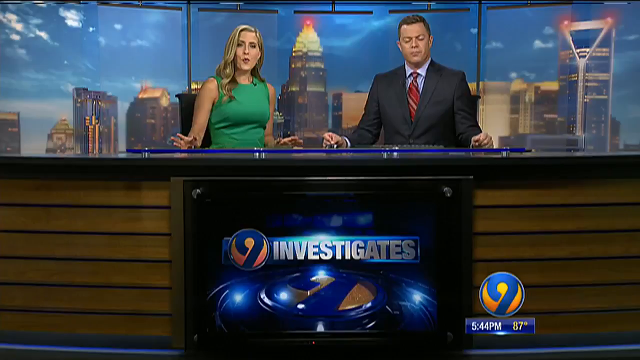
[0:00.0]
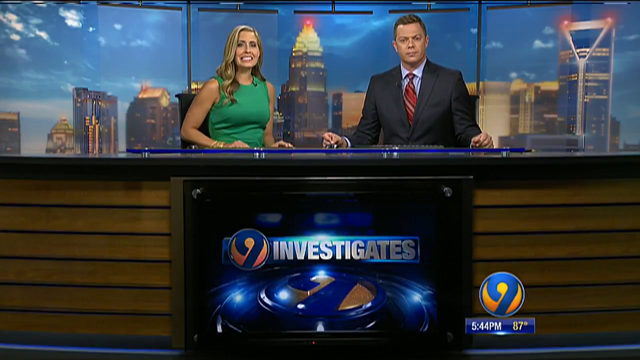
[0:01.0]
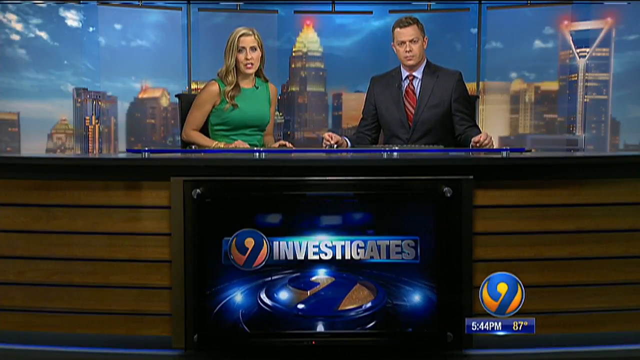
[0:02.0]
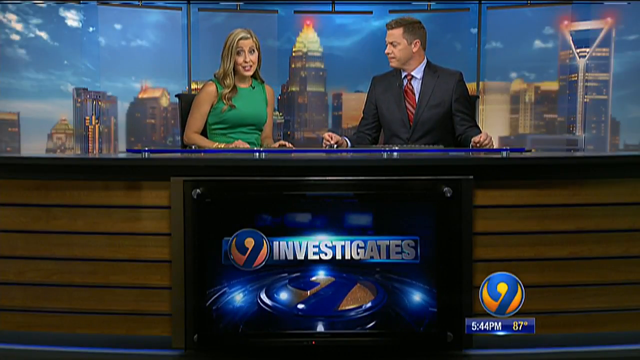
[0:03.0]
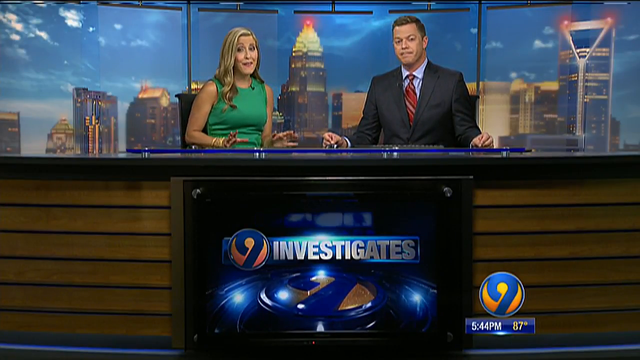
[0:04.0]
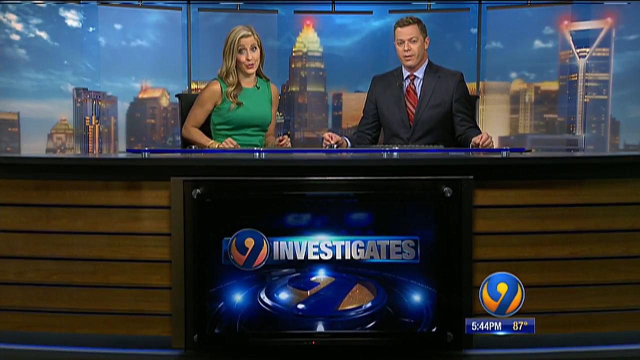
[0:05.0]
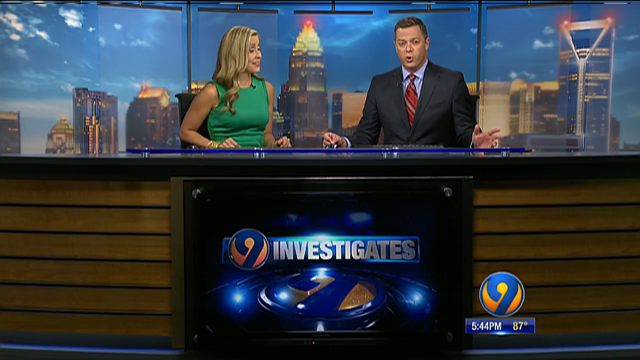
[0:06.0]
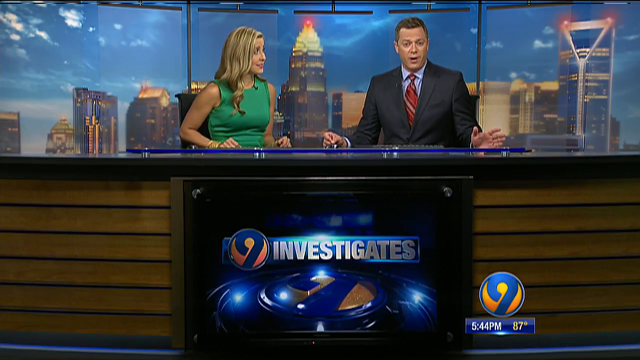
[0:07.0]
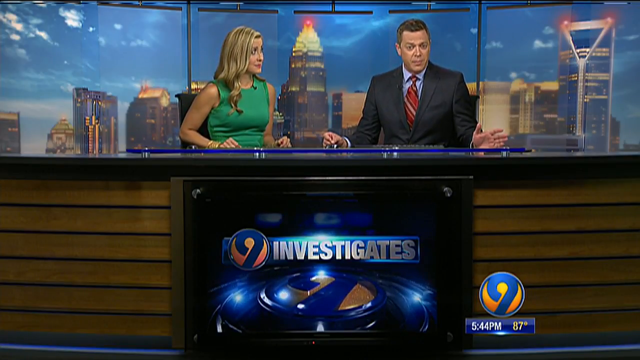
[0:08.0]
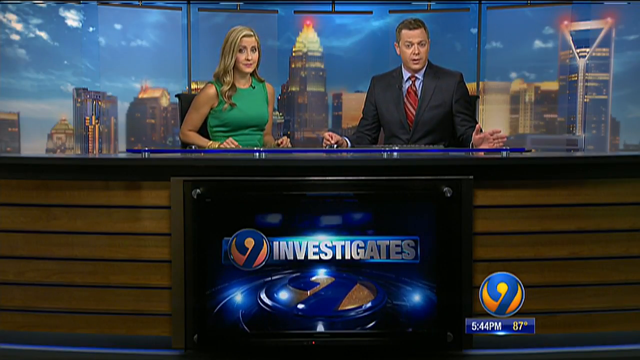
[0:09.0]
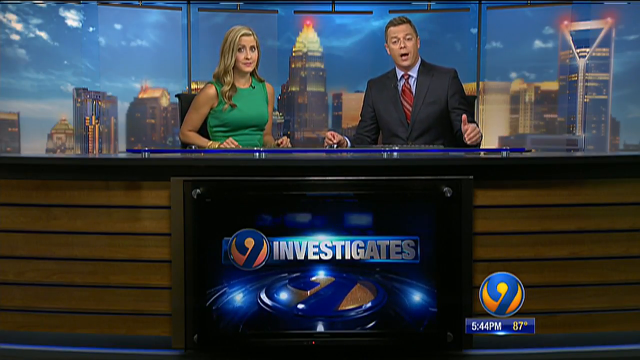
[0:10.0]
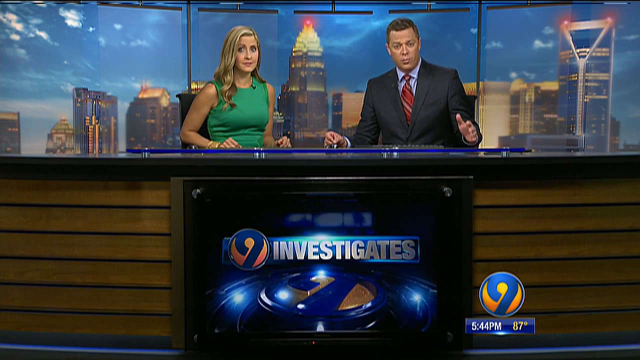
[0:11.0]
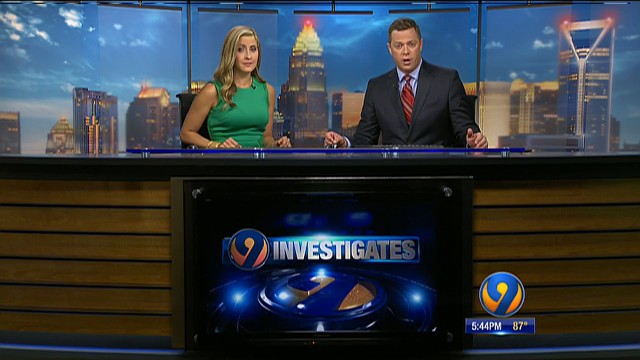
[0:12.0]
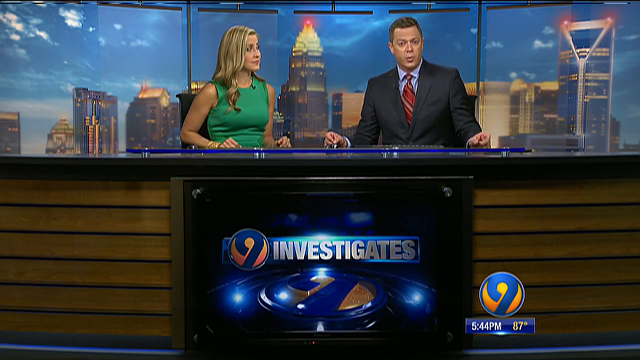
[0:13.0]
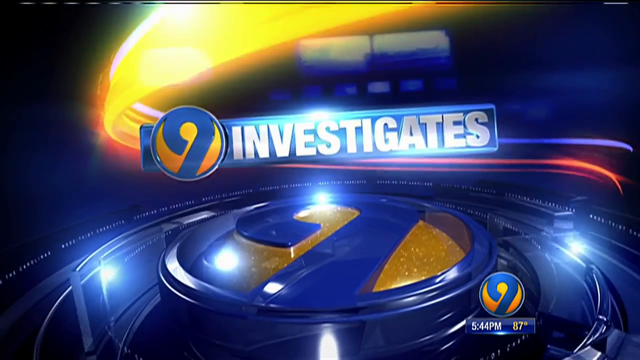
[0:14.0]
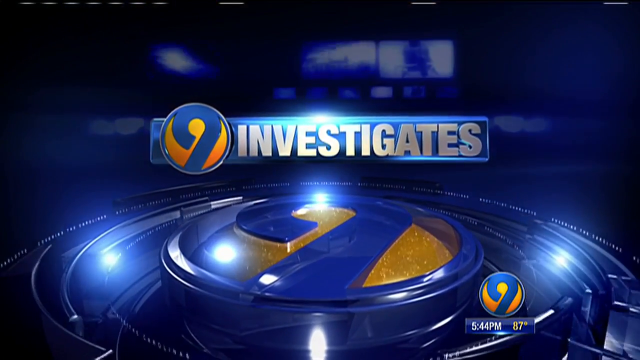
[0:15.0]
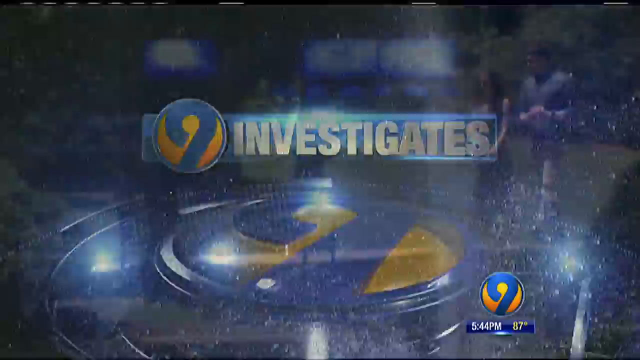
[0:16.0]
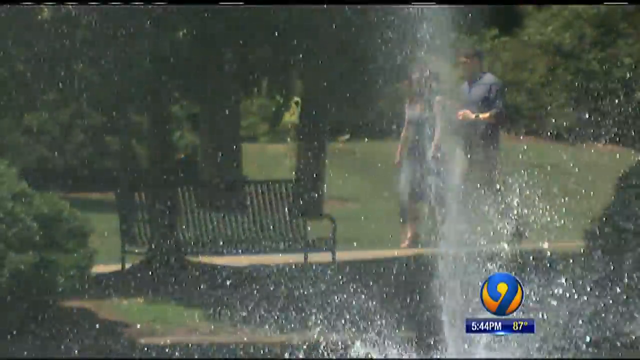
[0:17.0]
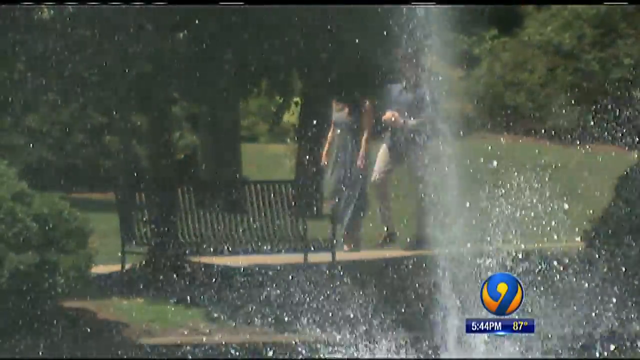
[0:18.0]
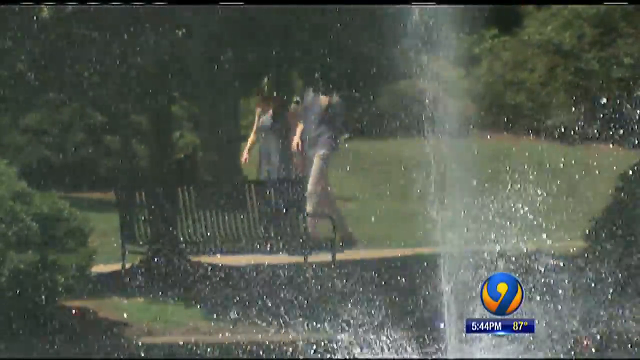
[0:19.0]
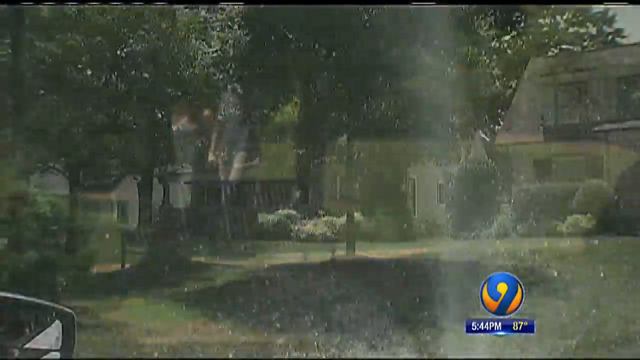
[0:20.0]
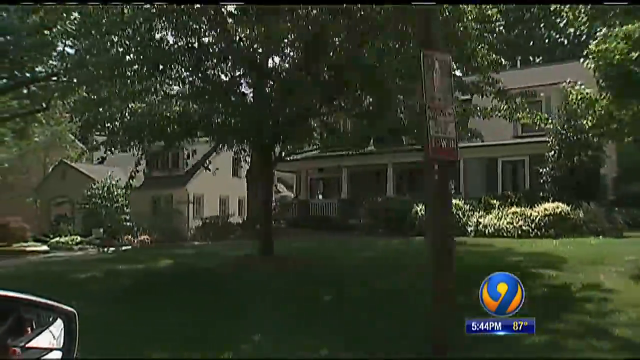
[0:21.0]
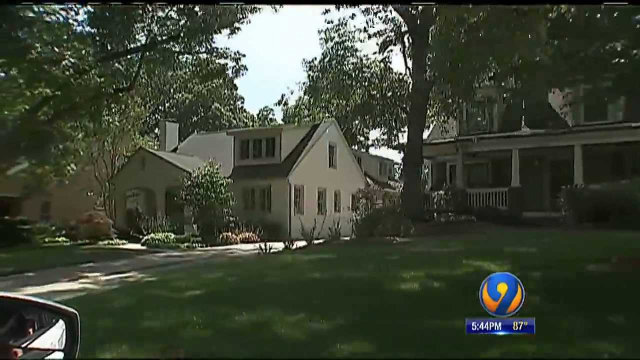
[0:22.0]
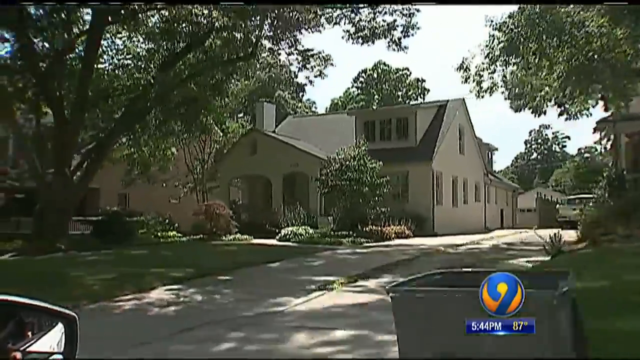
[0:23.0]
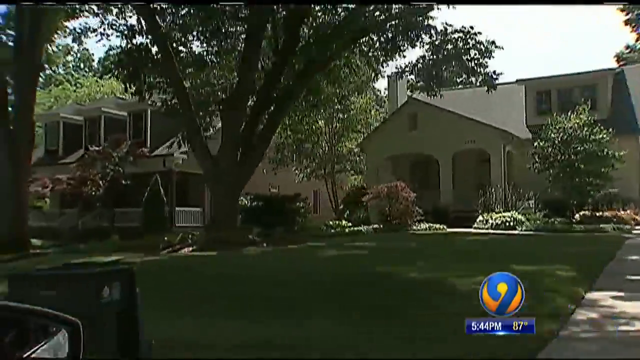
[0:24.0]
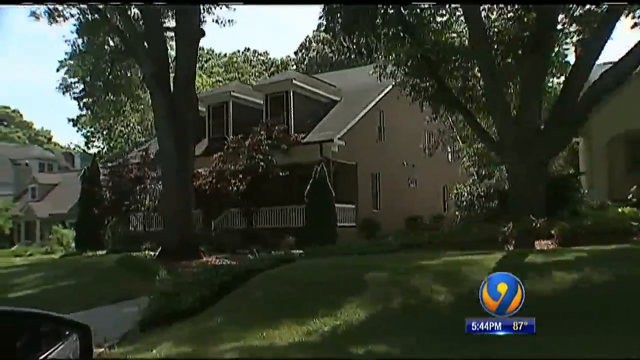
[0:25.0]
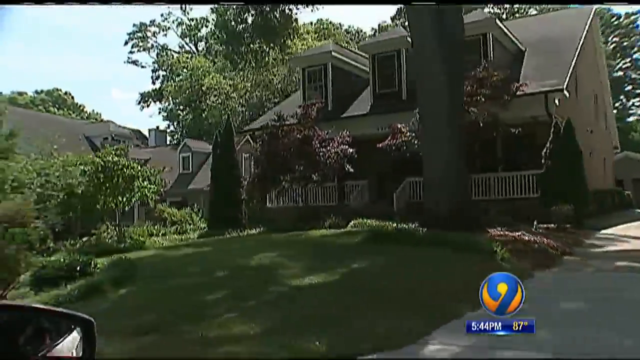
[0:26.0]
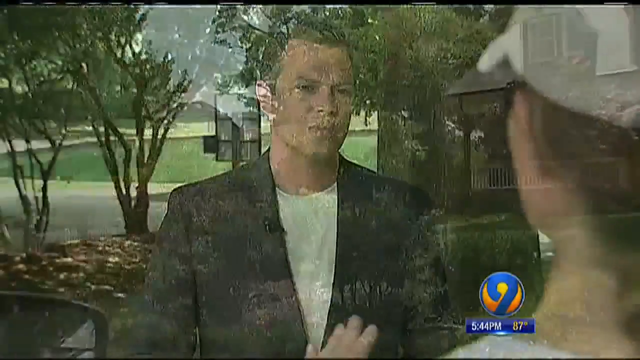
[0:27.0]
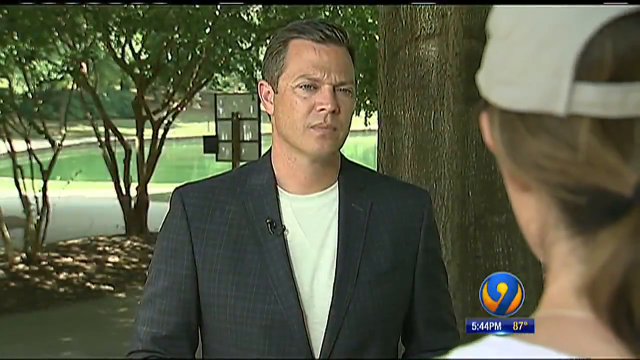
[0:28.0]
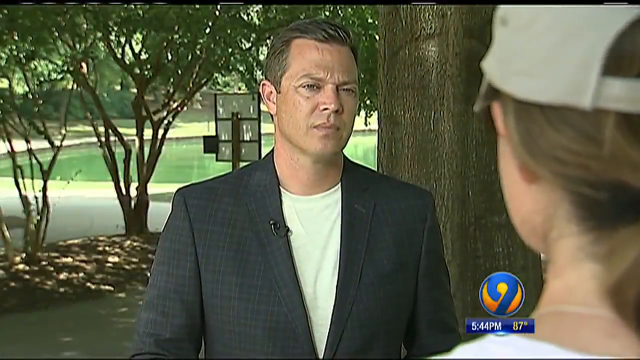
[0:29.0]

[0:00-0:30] The video opens on the on-screen text "channel 9 investigates." Two newscasters appear: on the left, a white woman with blondish hair wearing a green dress, and on the right, a white man with brownish hair. They are at a desk with wood slats on the front, and in front of that there is something like a TV set. Footage shows people walking around, then someone driving around an area that looks like suburbia. A newscaster, the same one shown in the studio, talks to someone, apparently interviewing people at their houses.